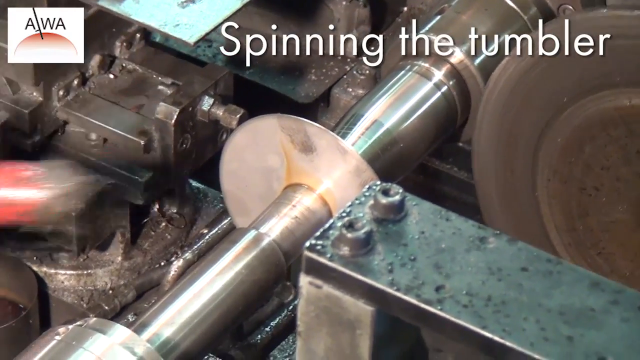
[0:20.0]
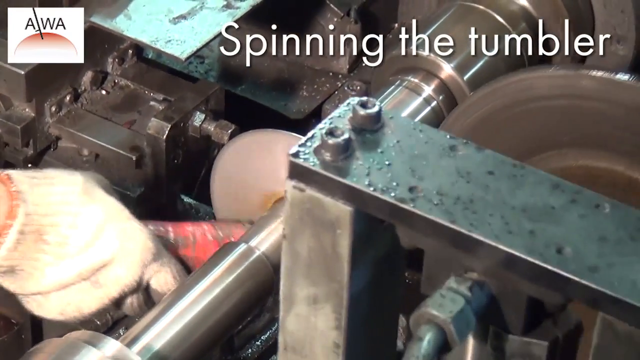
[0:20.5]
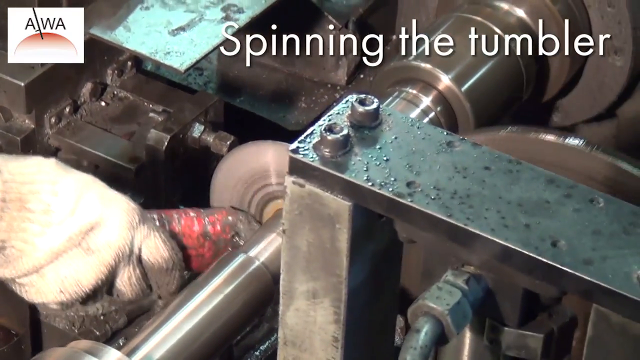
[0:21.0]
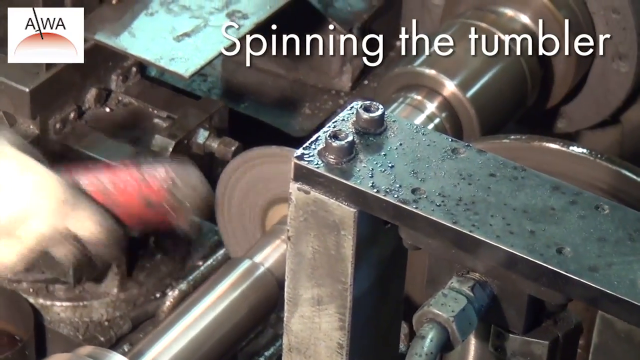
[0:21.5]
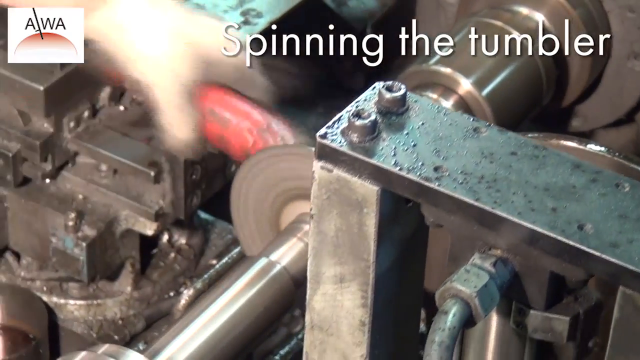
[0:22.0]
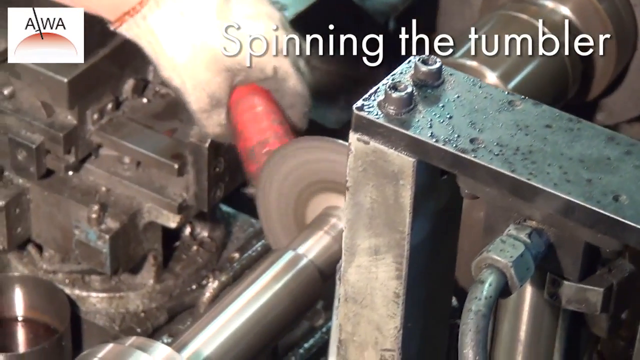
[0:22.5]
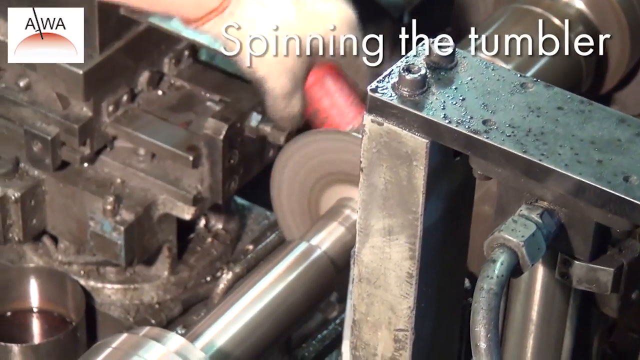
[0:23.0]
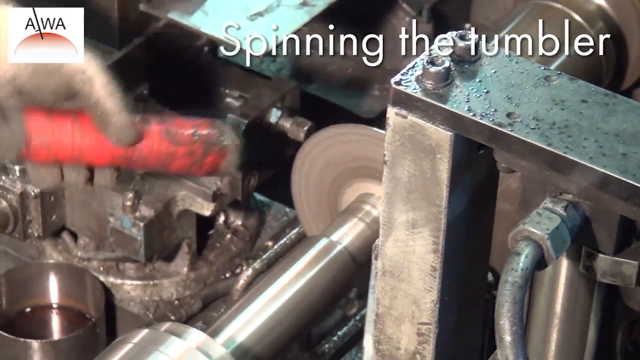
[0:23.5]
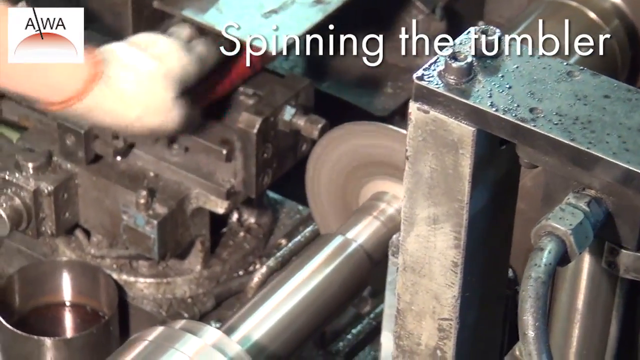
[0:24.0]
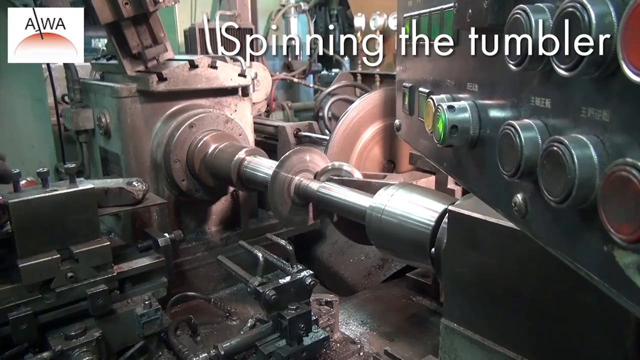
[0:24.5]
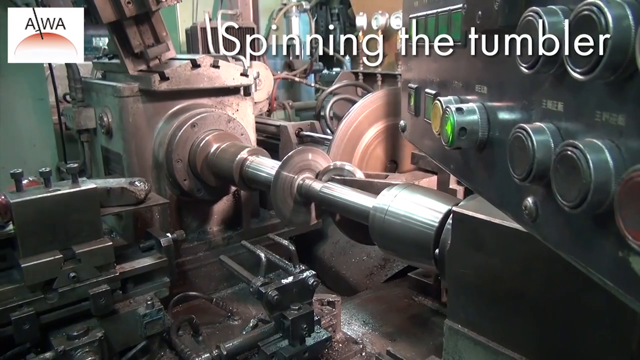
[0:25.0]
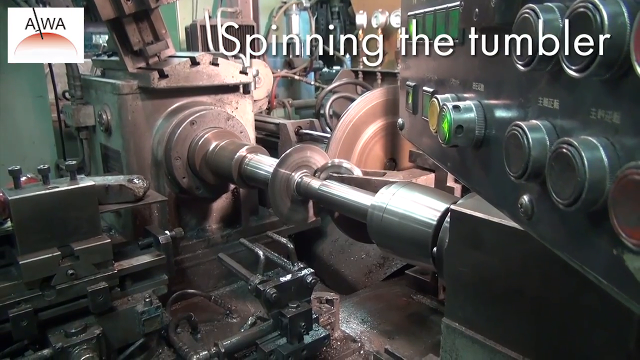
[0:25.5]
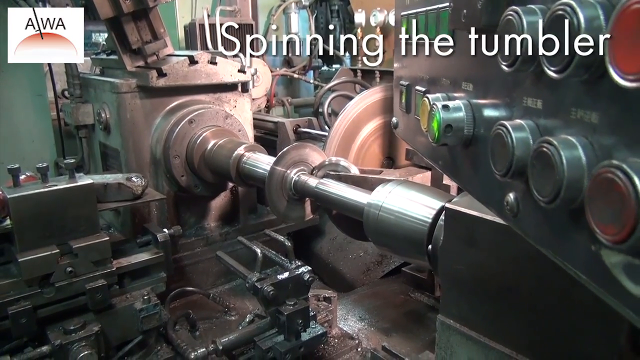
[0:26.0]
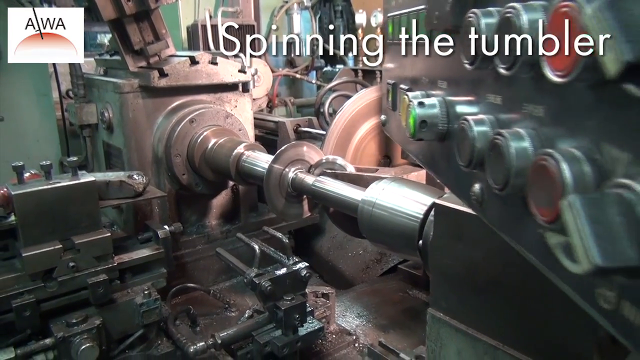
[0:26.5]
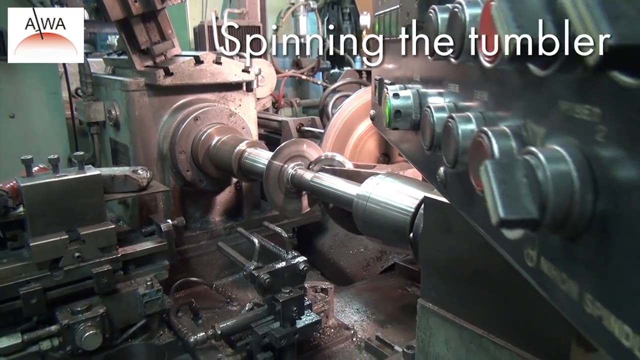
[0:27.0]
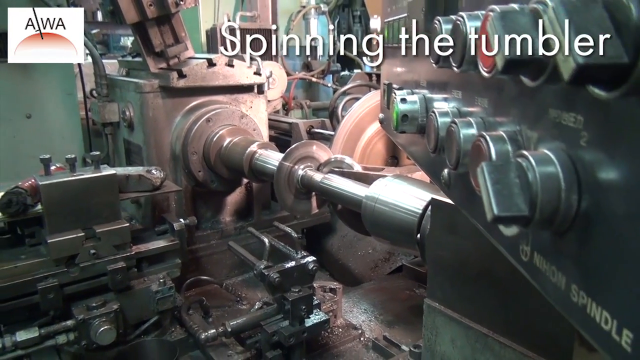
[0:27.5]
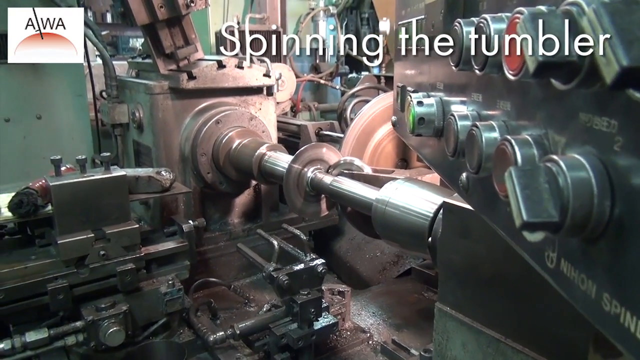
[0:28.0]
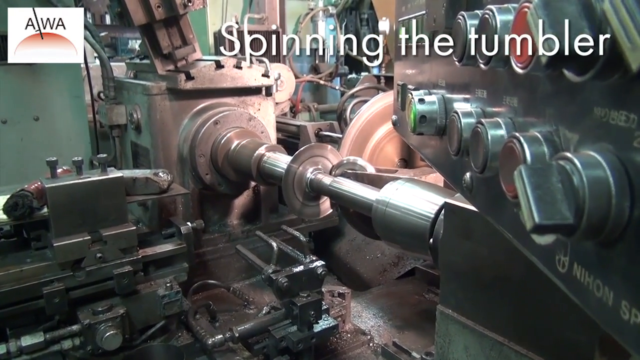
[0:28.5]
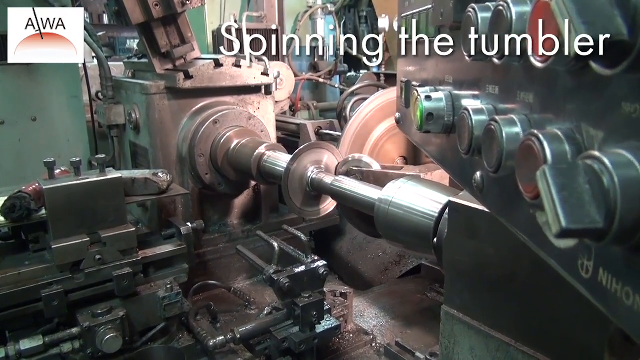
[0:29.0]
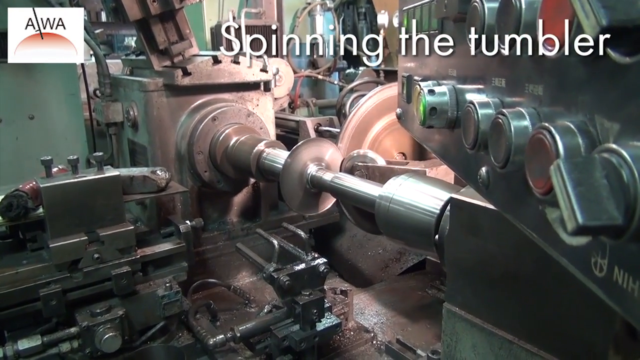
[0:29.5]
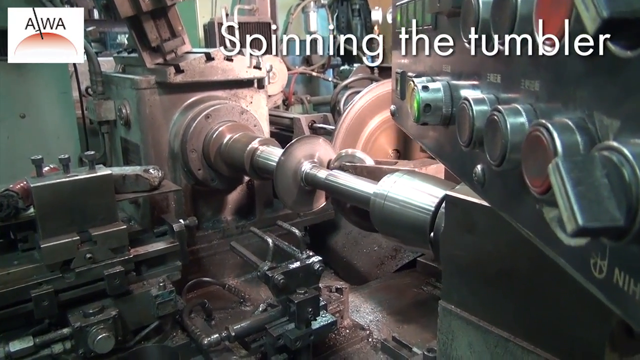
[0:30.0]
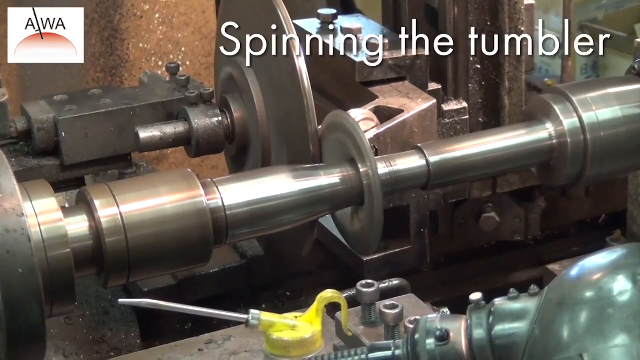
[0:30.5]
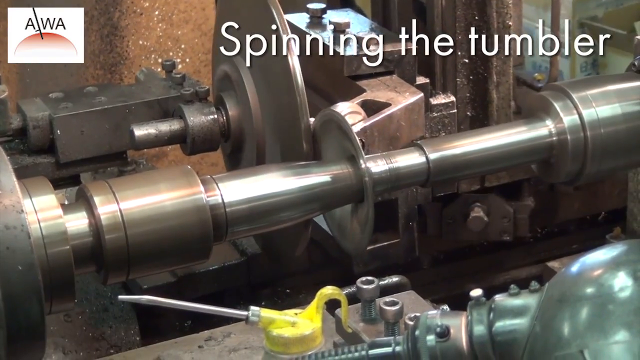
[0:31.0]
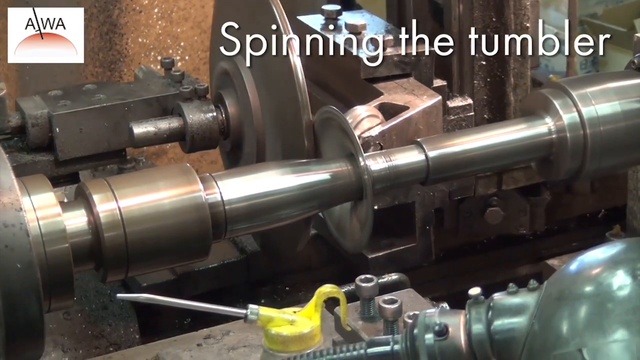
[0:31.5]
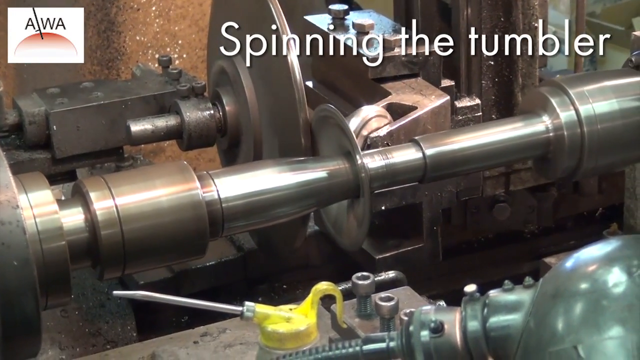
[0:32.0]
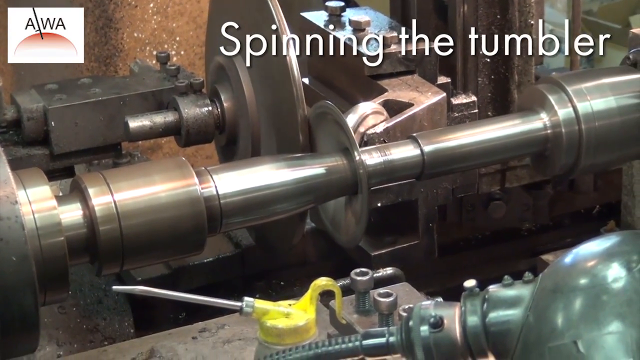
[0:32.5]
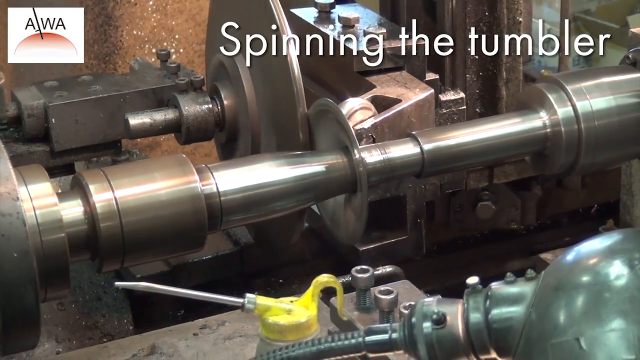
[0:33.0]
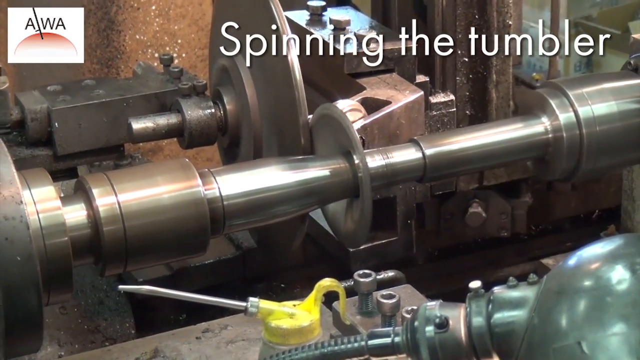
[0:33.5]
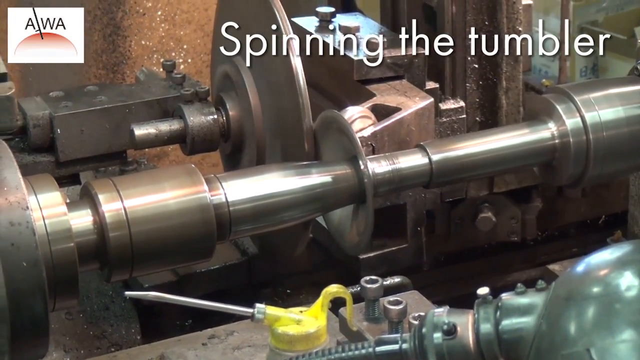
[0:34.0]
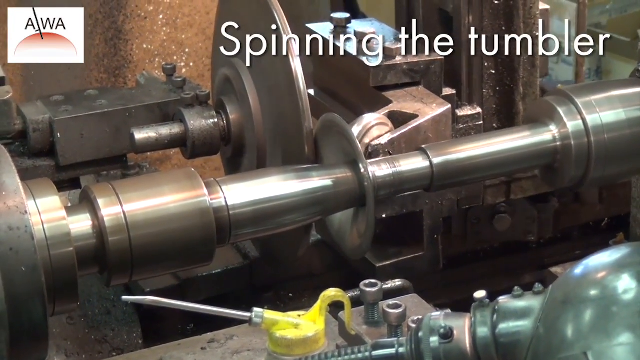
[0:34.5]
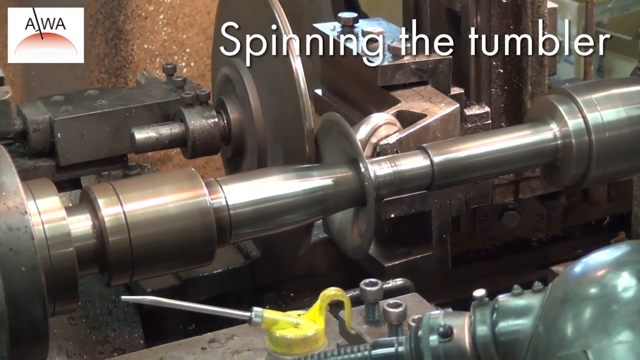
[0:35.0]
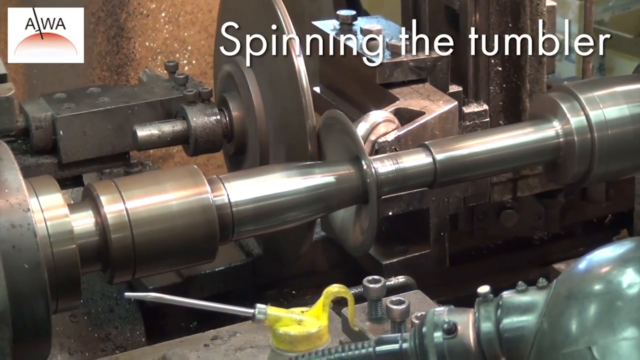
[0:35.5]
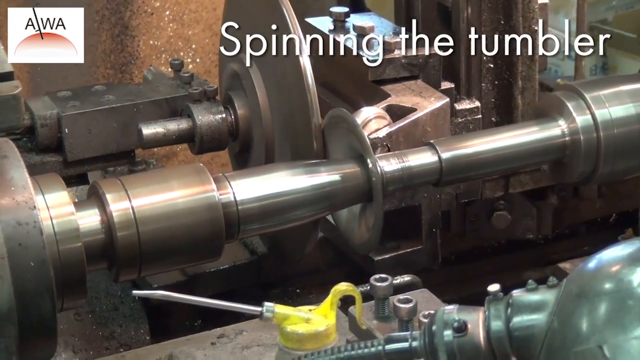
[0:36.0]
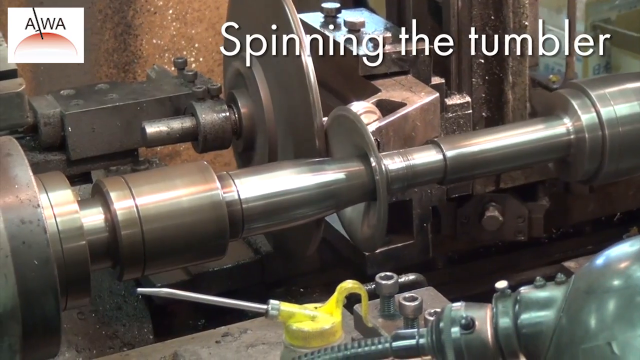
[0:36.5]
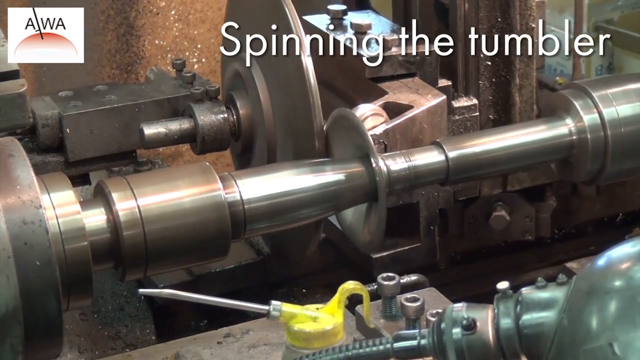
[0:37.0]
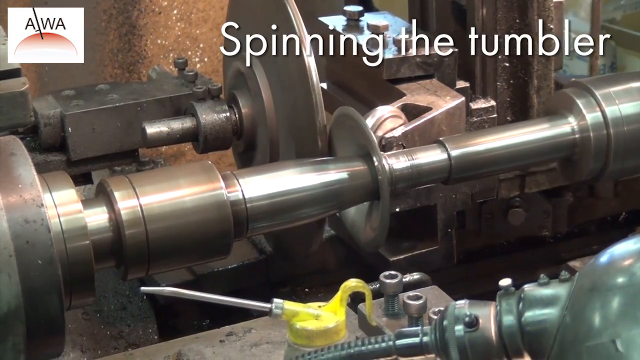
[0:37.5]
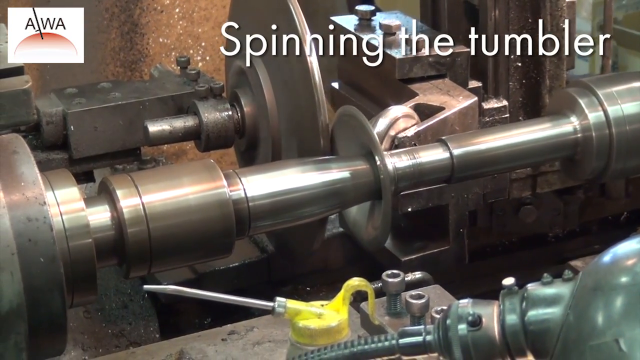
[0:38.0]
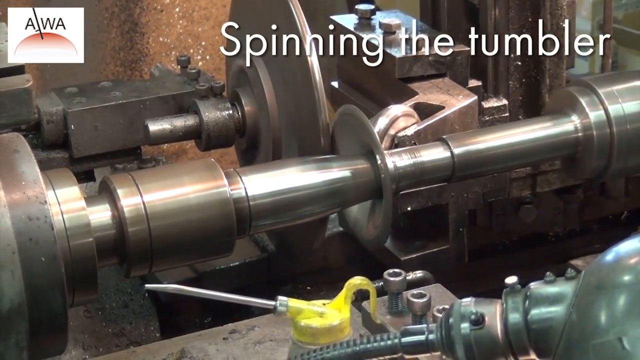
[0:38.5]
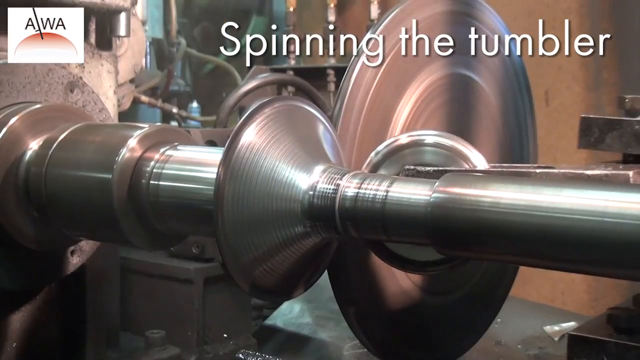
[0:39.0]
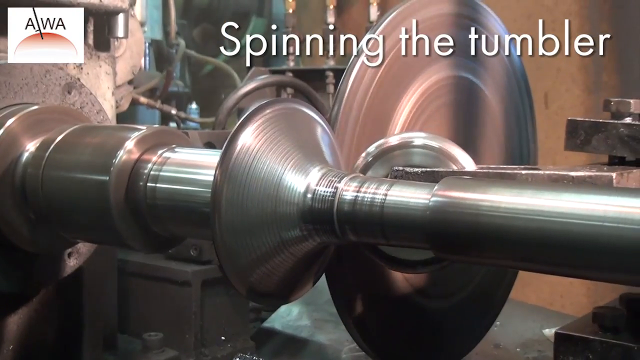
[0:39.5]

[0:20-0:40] A disc spins in some machinery. A man reaches out with some kind of red tool that seems to adjust the disc. A shot shows the disc spinning fairly quickly, then another shot shows factory machinery pushing the disc forward so that it becomes kind of concave. The on-screen text reads "spinning the tumbler" in white. The man wears gloves. Knobs and dials on the machinery are visible on the right. The machinery shapes the disc, and a round wheel adjusts the shape as it moves. The machinery looks bright, silvery and shiny, while some of it looks kind of dirty, rusty or greasy, as if it has been in use for a while; in the back some of the equipment looks rusty and old. The walls look kind of mint green. Some kind of nozzle attached to a yellow cap is sitting on the workspace. In the top left corner of the screen there is a white box with the letters "AWA" in black and a logo that looks like a red semicircle with a black stem attached to it.